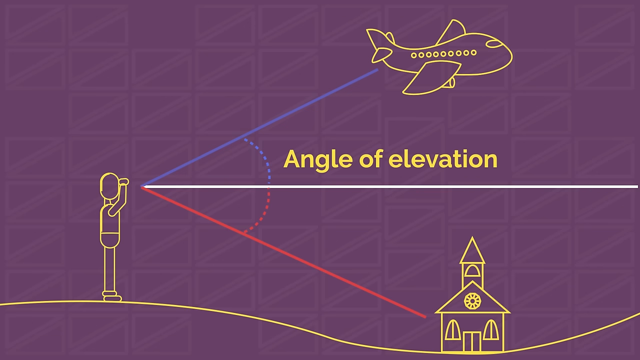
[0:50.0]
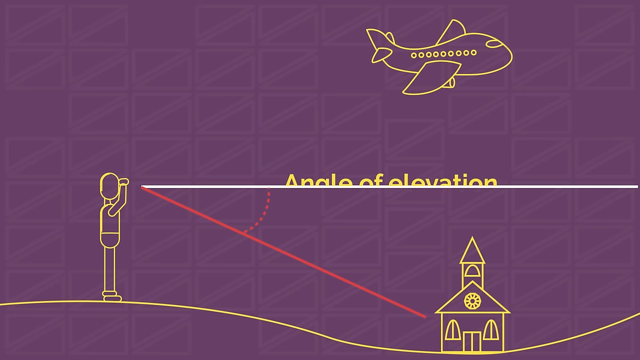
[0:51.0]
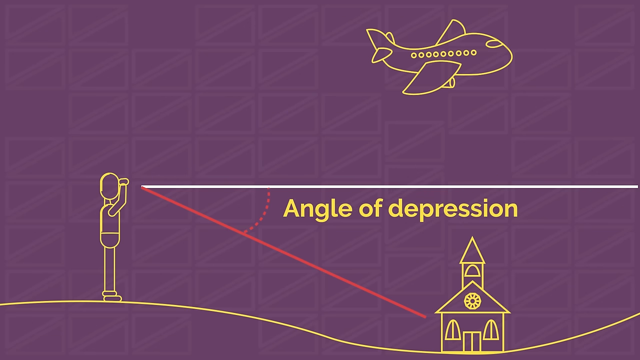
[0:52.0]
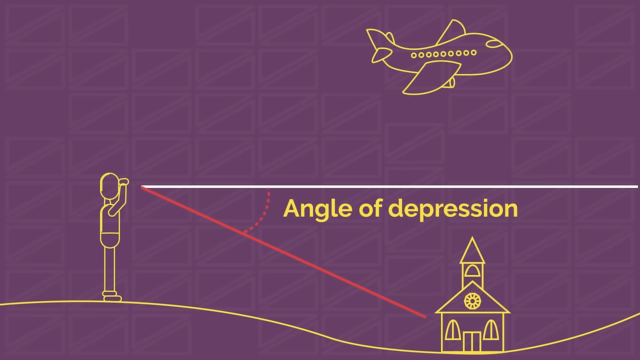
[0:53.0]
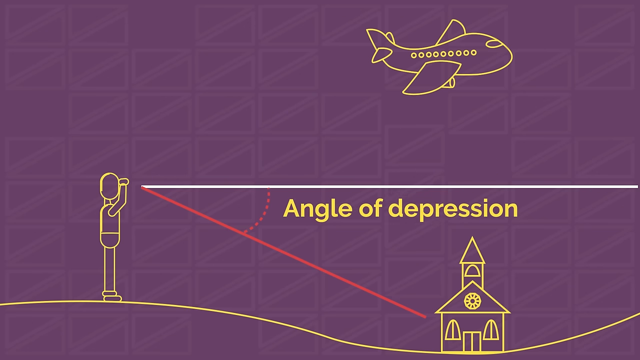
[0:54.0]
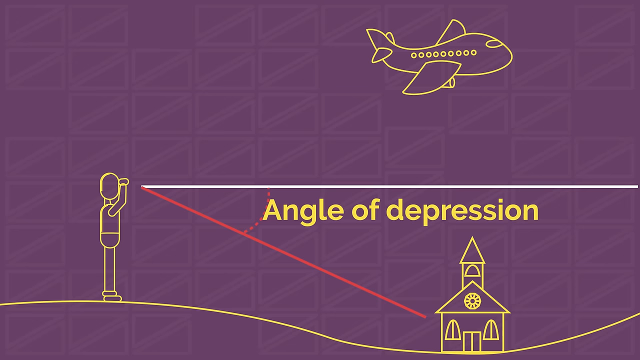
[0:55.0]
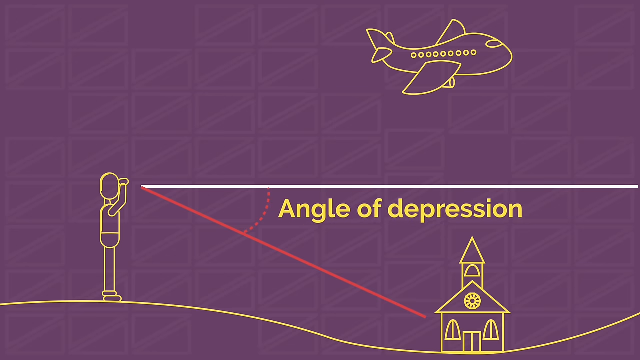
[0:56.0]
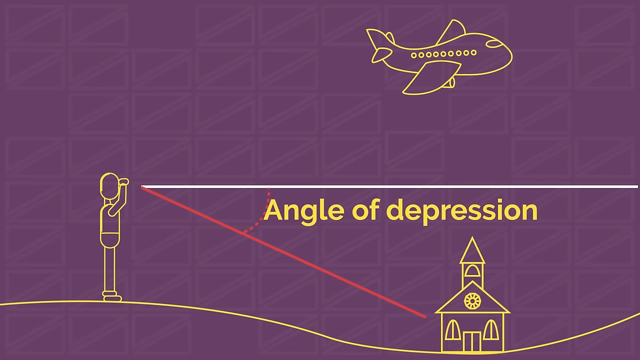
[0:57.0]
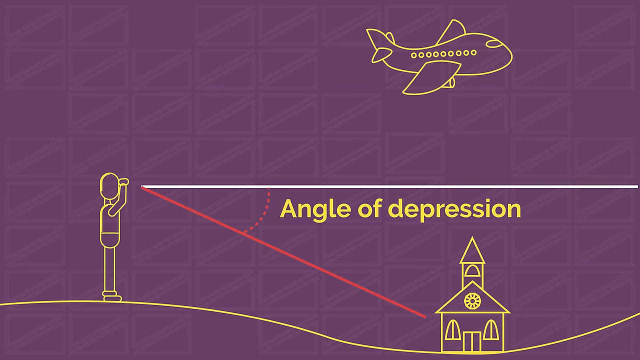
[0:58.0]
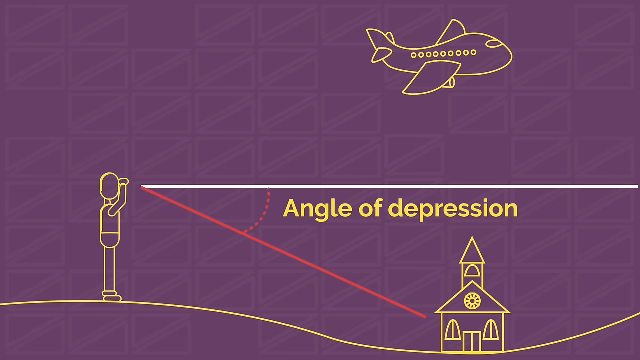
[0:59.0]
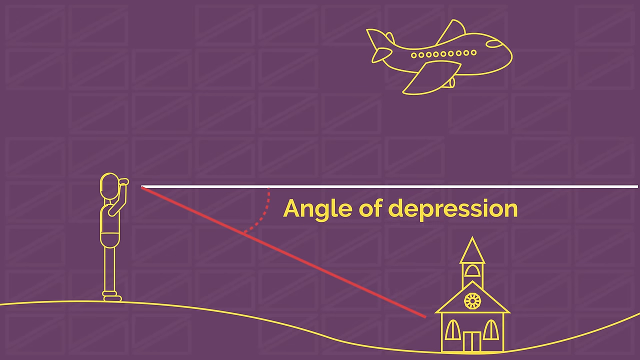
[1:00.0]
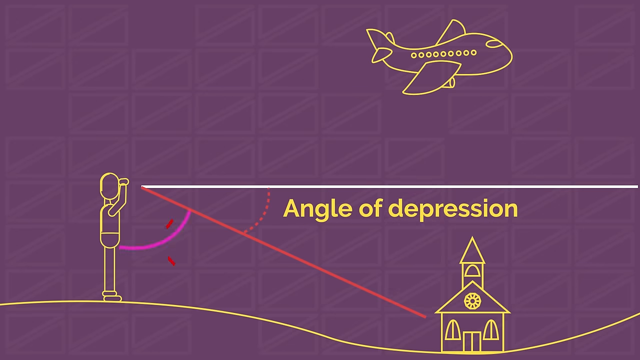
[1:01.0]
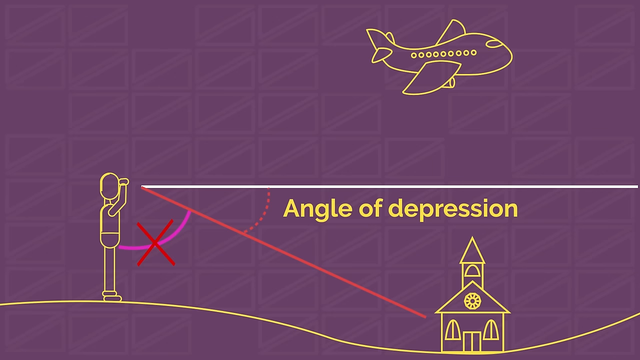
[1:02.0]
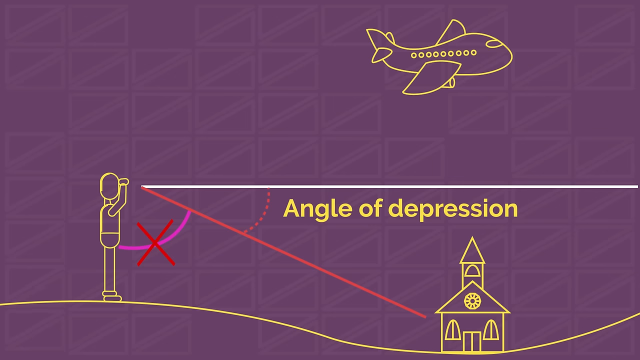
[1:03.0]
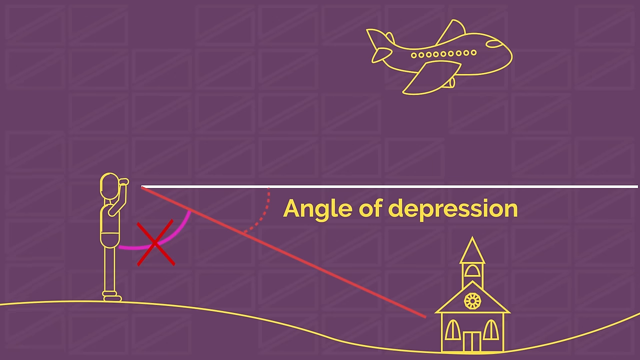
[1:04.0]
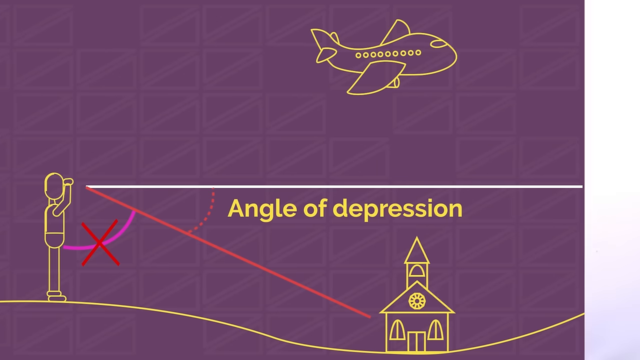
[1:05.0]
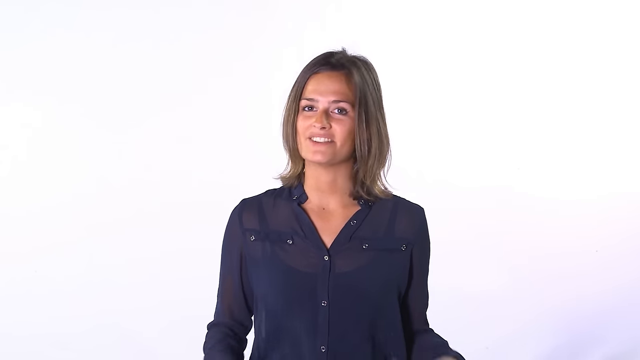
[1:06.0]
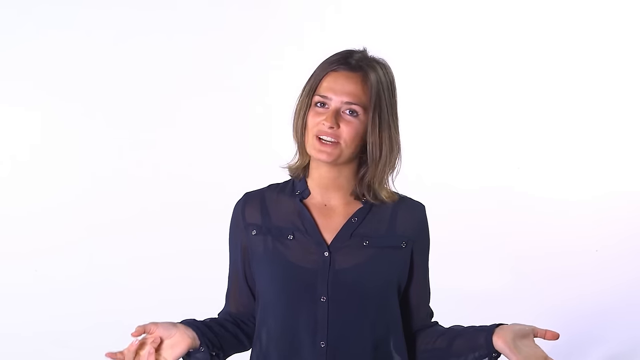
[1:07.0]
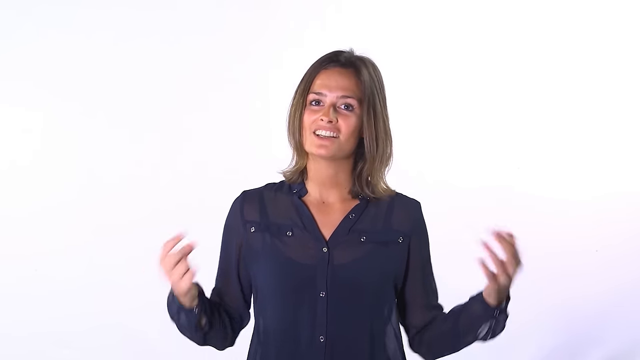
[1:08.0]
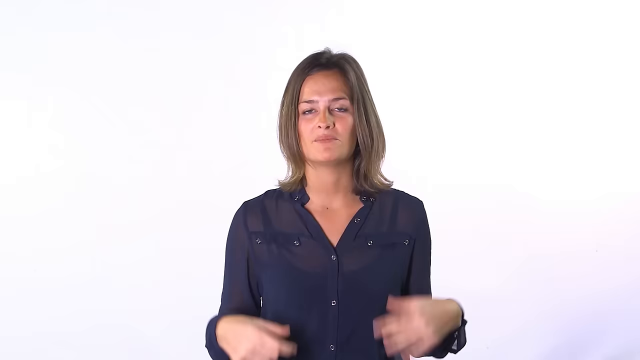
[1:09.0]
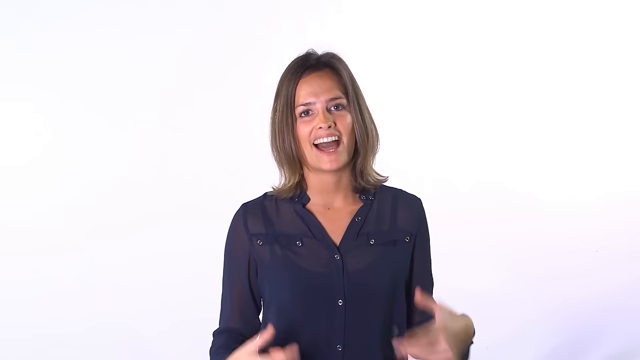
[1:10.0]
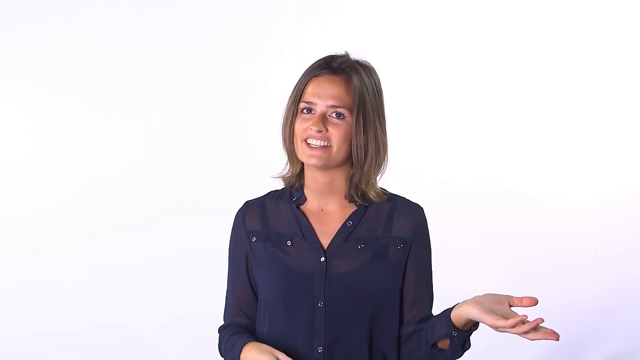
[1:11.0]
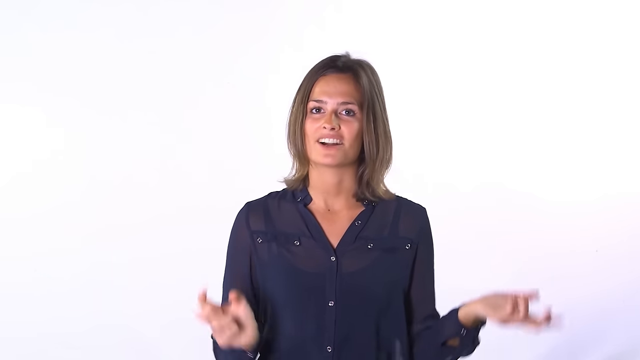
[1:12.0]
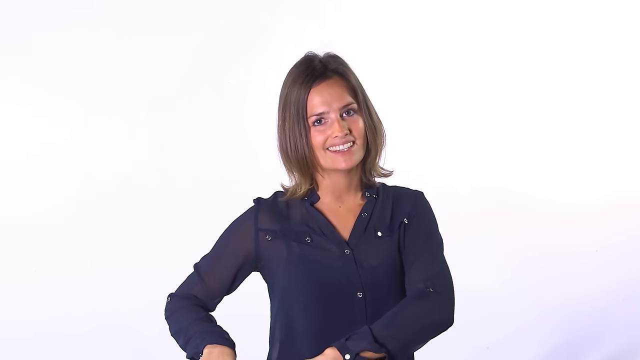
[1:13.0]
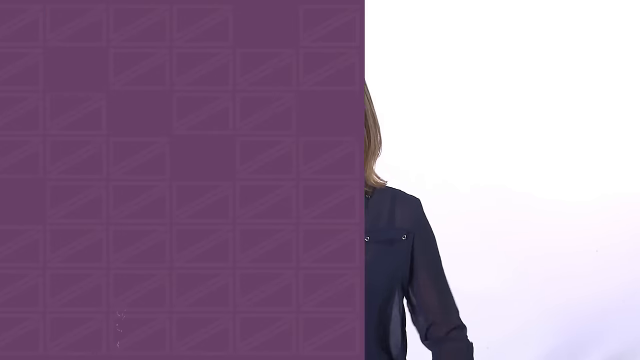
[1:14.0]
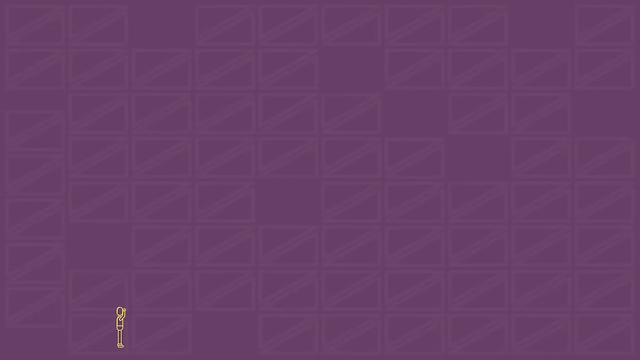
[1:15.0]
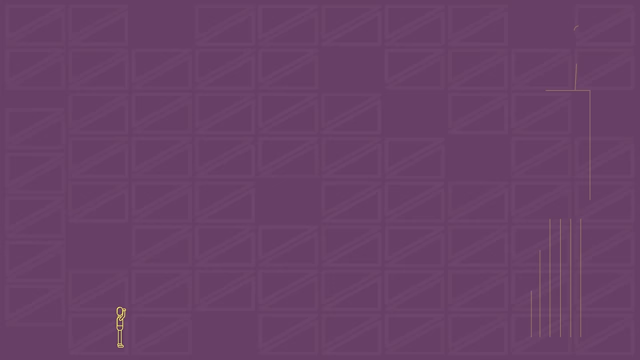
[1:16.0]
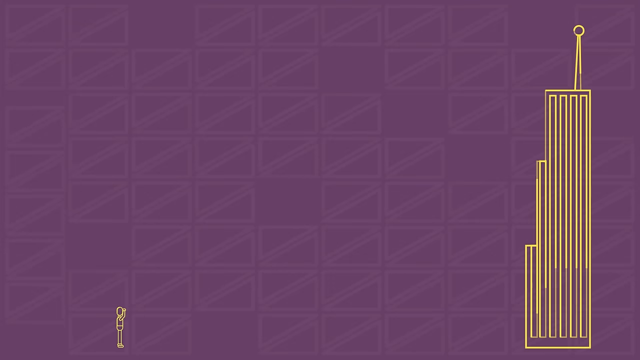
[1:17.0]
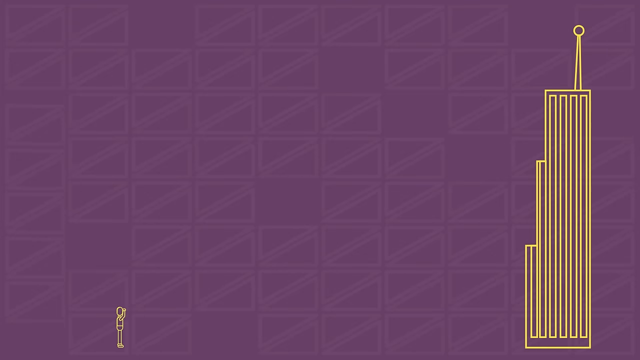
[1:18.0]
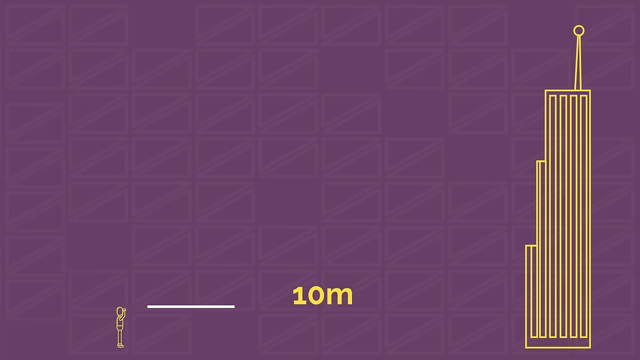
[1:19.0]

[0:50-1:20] The white line down the middle has a label above it and a label below it; the one above appears to be the angle of elevation and the one below the angle of depression, showing the angles from the person to the airplane and from the person to the schoolhouse. The "angle of depression" text zooms in and out, getting bigger and smaller repeatedly as if being emphasized. A purple line is drawn from the red line to the figure, and then a red X is drawn through it, apparently indicating that it should be ignored. The whole page swipes to the right and the woman is speaking again. Her hands are kind of at her sides but also around the level of her stomach. Her head is turned slightly to the right and she looks towards the camera out of the left side of her eyes; she turns her head towards the camera and then back to the right, always looking directly at the camera as she speaks.